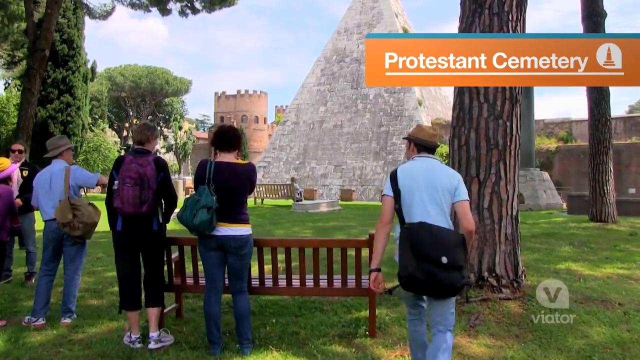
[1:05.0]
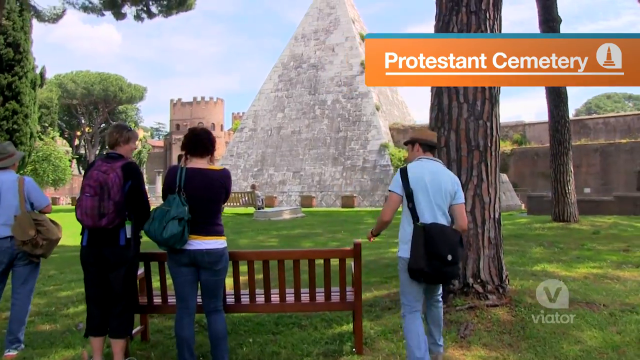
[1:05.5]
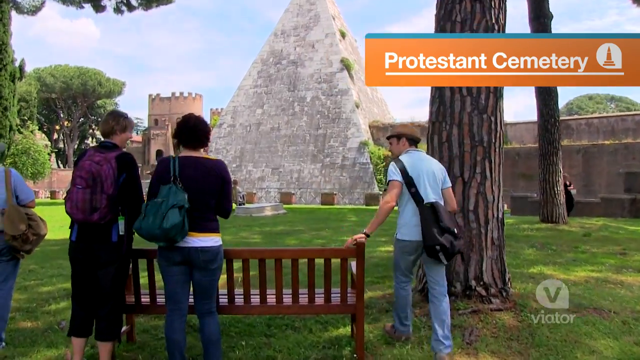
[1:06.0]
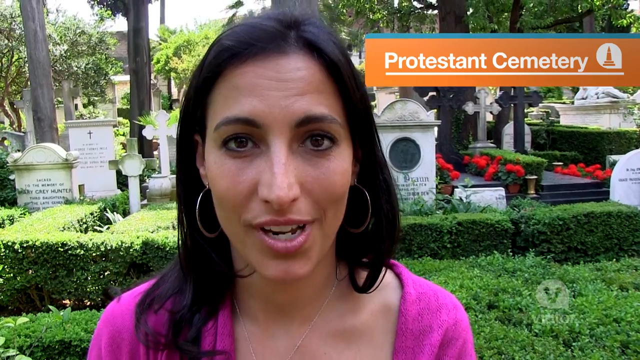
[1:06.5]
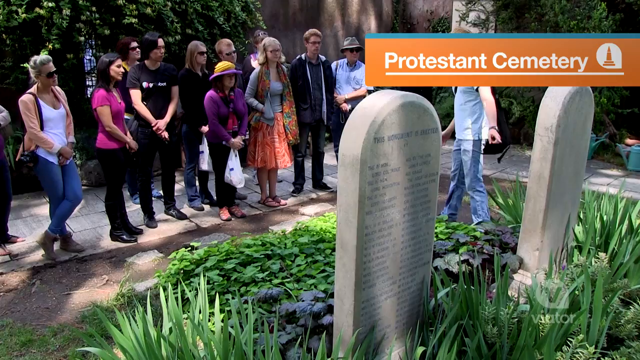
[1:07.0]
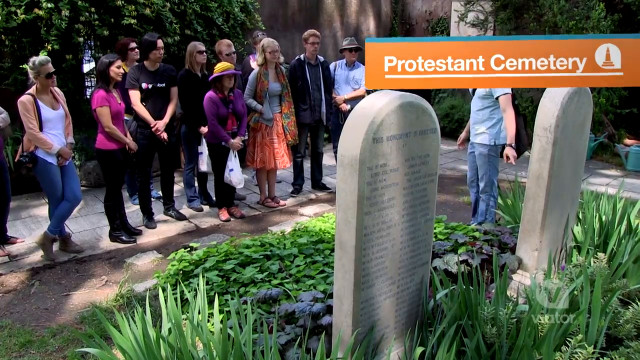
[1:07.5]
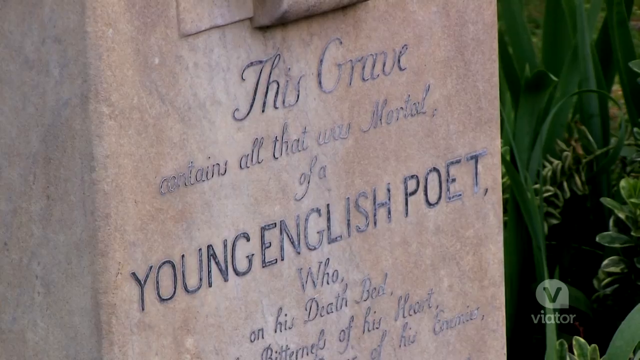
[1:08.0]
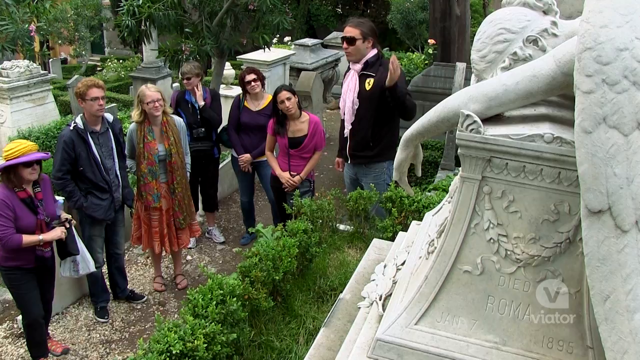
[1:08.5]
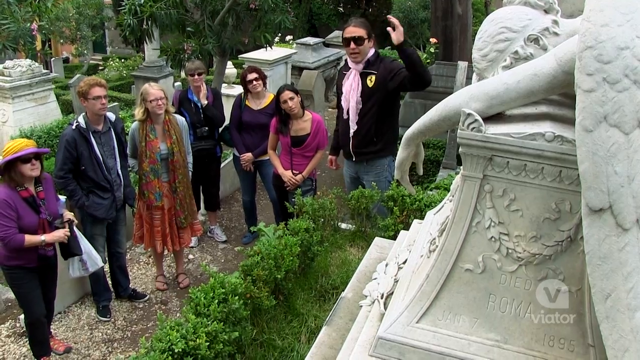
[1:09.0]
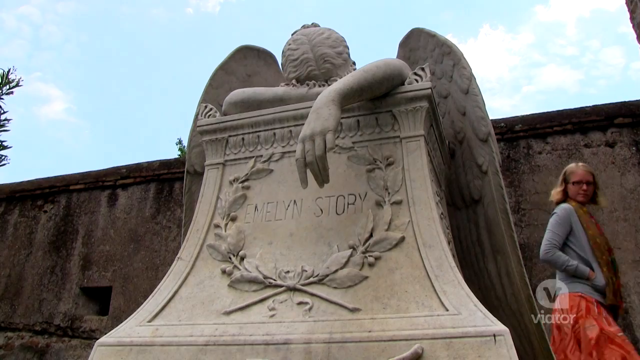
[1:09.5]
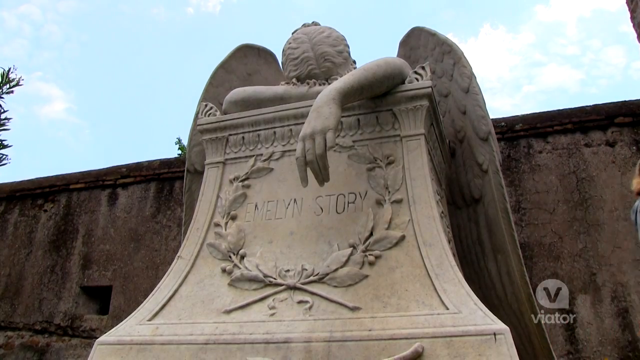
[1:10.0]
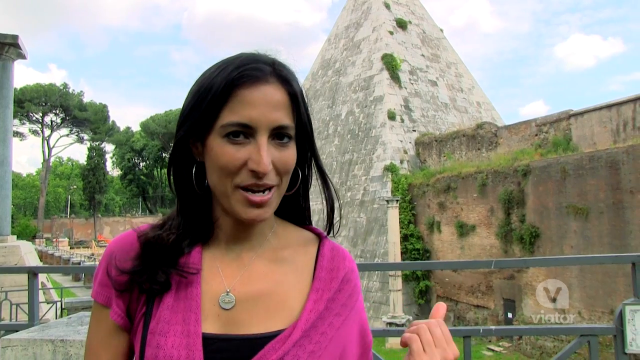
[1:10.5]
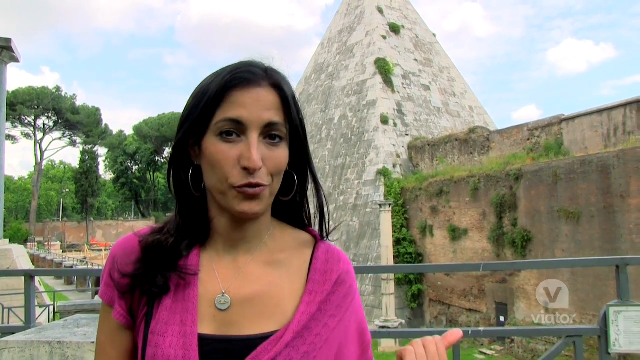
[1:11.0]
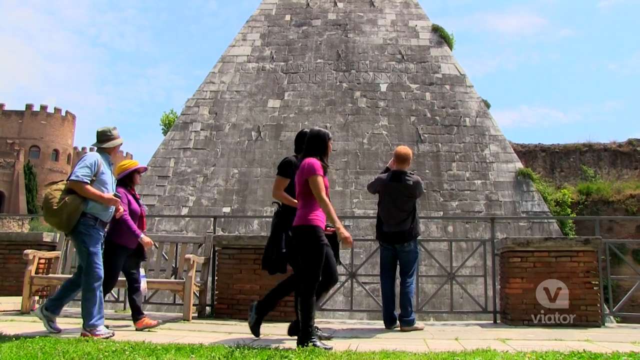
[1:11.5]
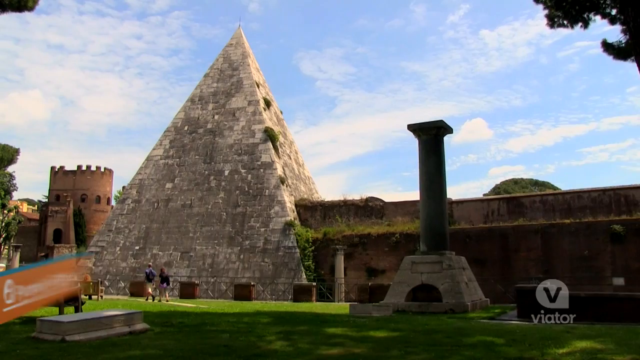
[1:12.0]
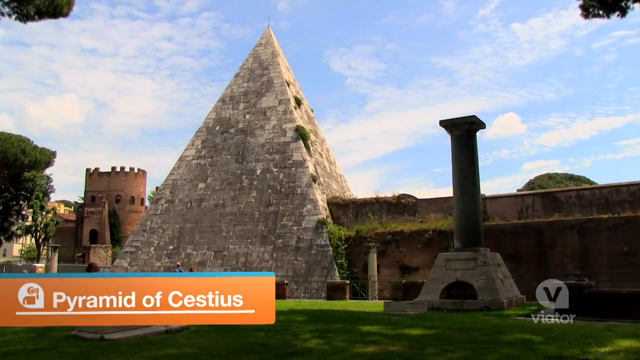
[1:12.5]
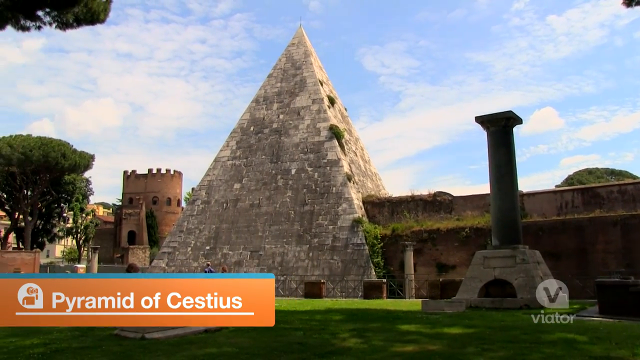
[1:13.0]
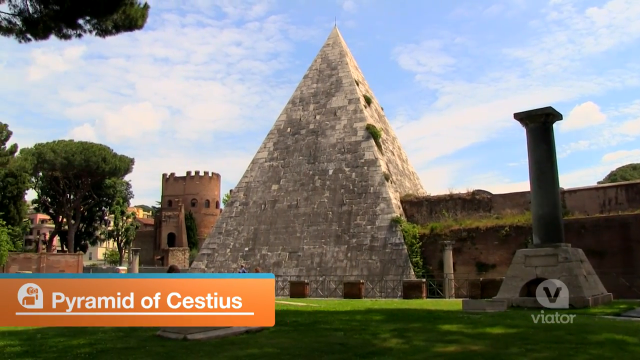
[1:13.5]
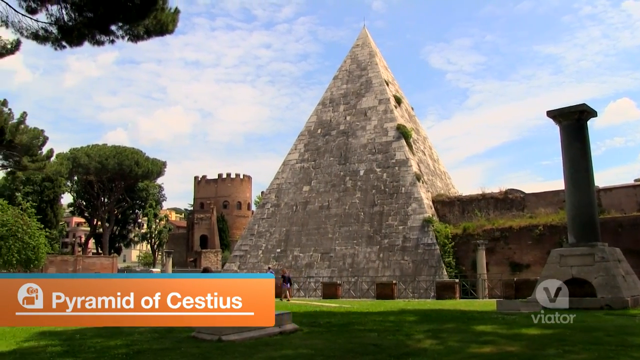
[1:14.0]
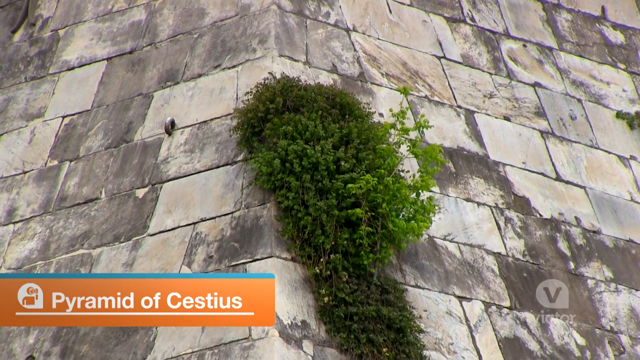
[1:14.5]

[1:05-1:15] The Rome food walking tour is at a cemetery, with statues and other decorative things among the graves. There is a bench that looks like it is made of redwood. People take pictures of the sights and scenery. There are trees and lots of lush greenery, and there are pyramids. Words pop up in the corner identifying it as a Protestant cemetery and the Pyramid of Cestius. One of the headstones is of a young English poet. The headstones are very intricate, and the cemetery is beautifully landscaped.